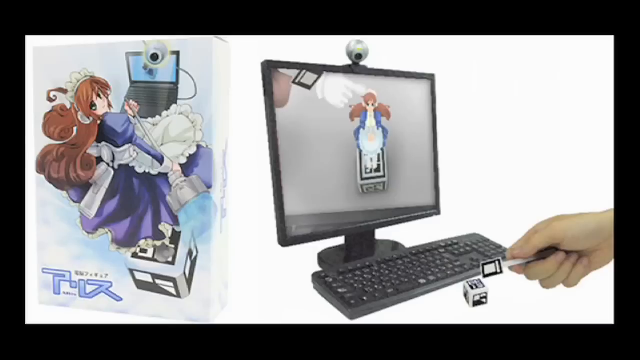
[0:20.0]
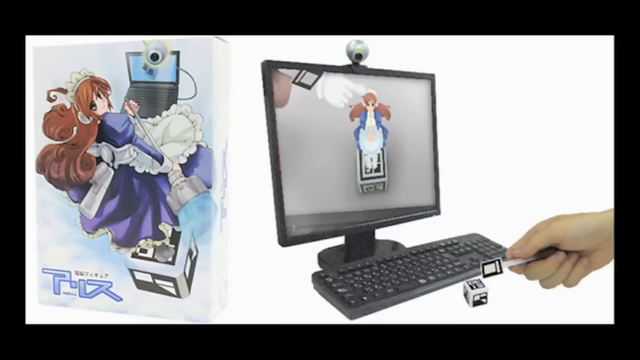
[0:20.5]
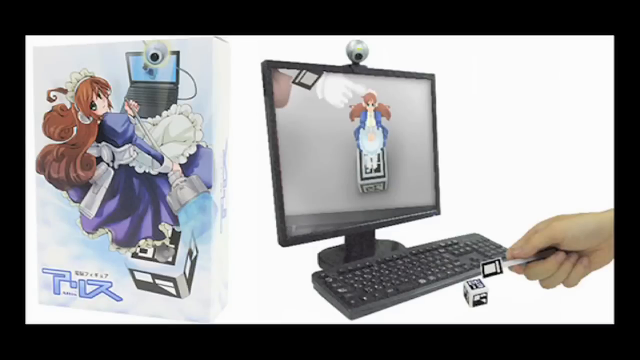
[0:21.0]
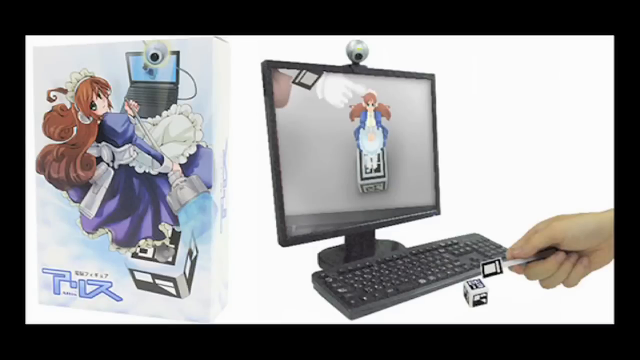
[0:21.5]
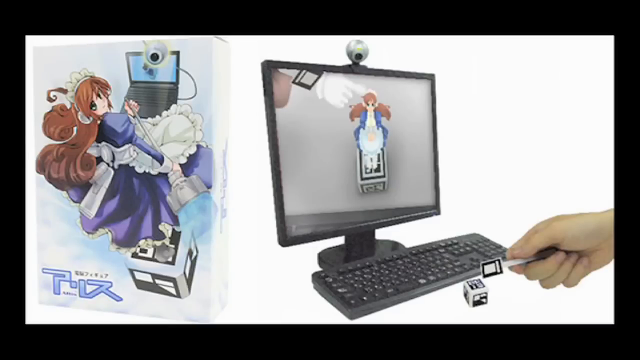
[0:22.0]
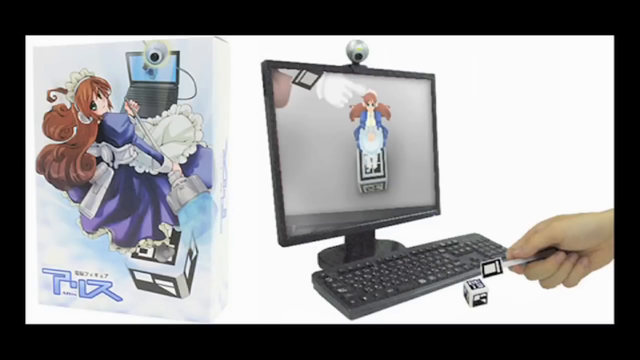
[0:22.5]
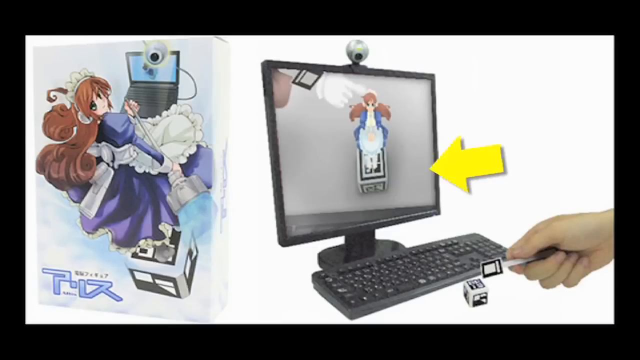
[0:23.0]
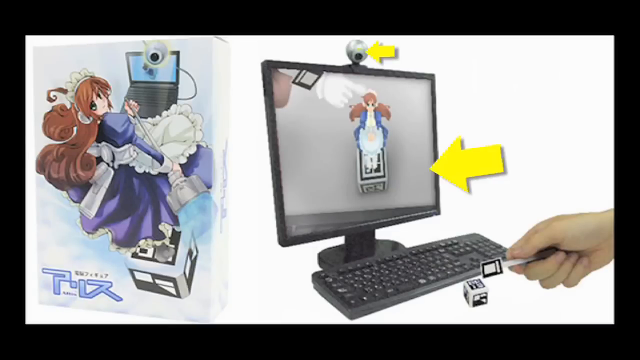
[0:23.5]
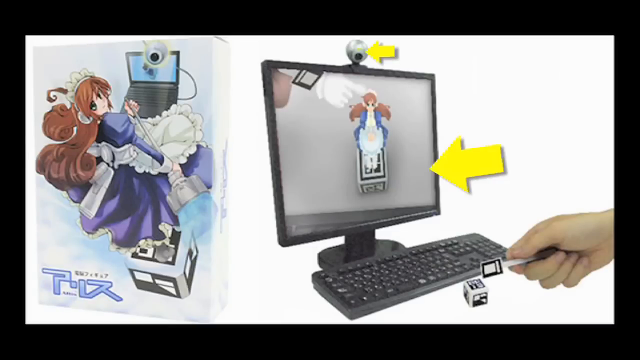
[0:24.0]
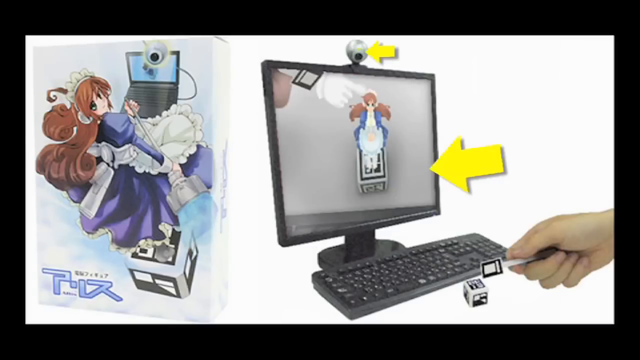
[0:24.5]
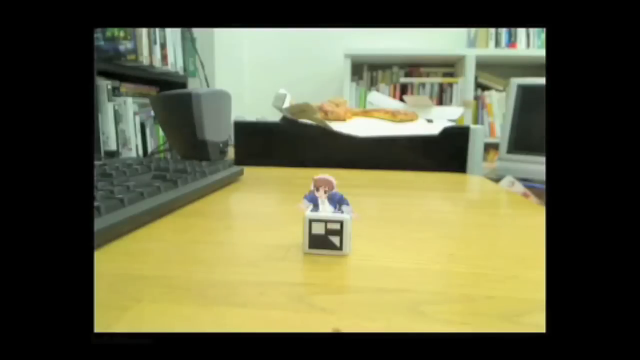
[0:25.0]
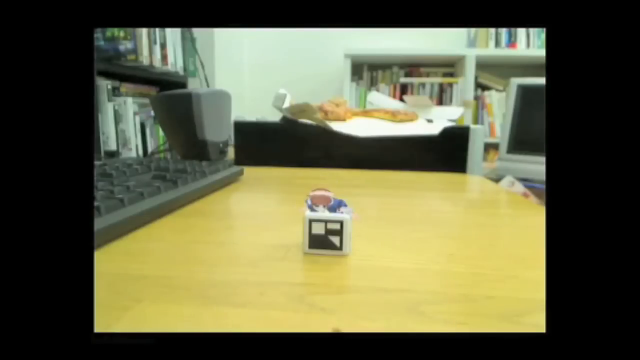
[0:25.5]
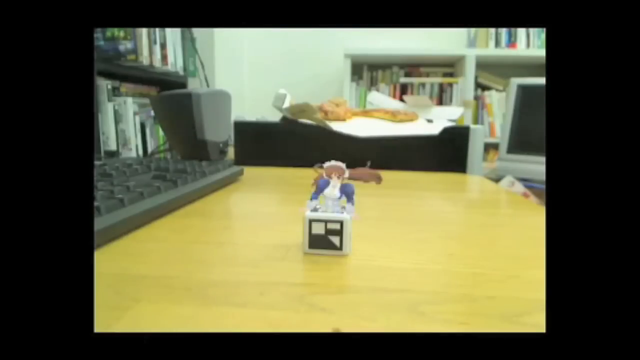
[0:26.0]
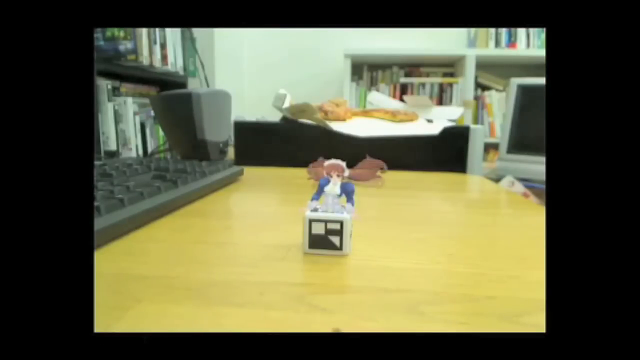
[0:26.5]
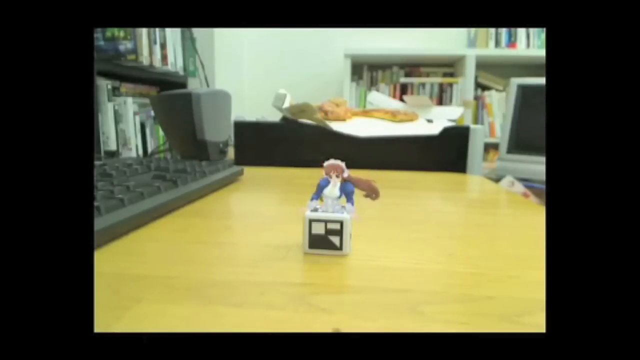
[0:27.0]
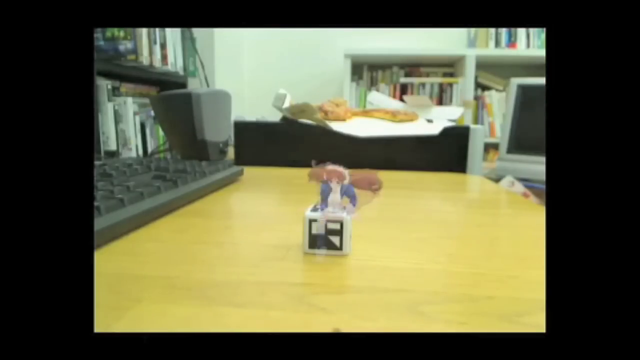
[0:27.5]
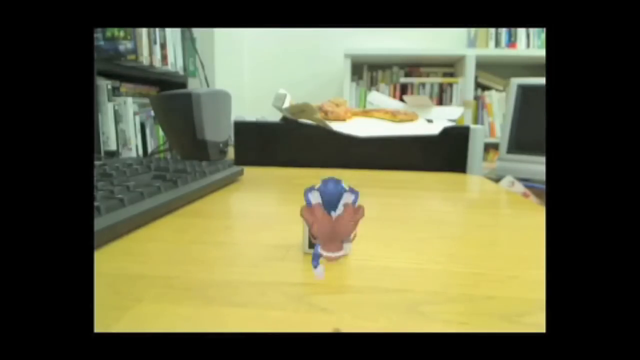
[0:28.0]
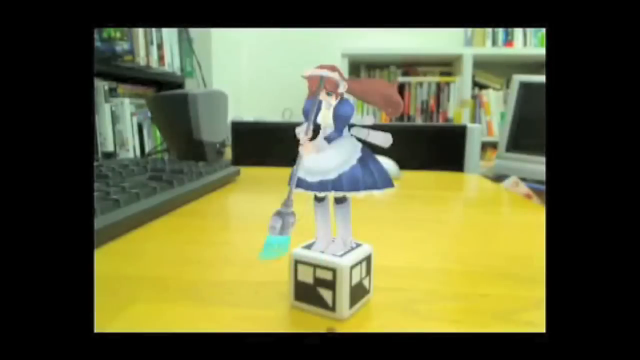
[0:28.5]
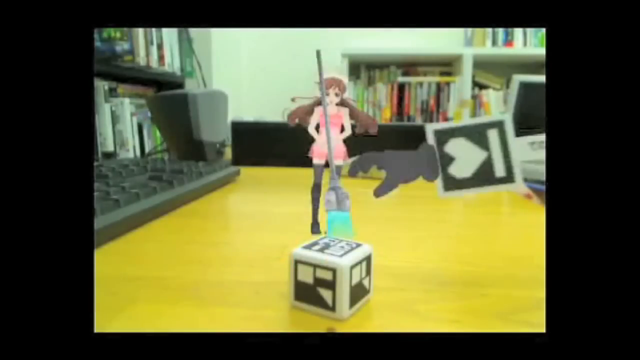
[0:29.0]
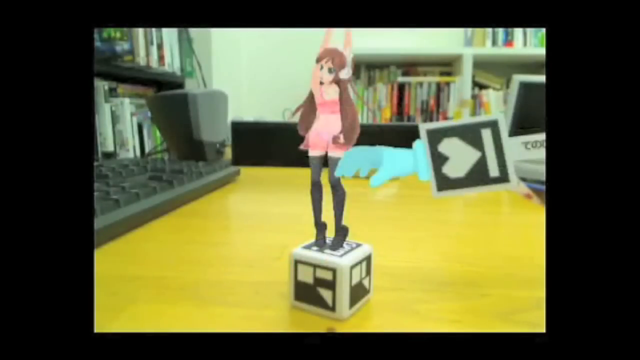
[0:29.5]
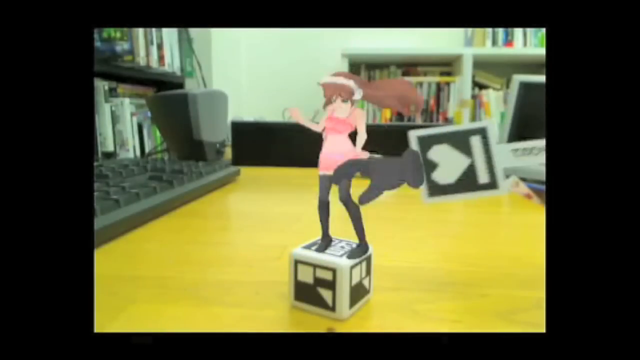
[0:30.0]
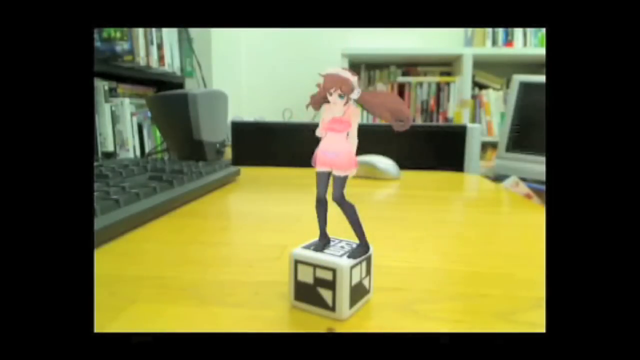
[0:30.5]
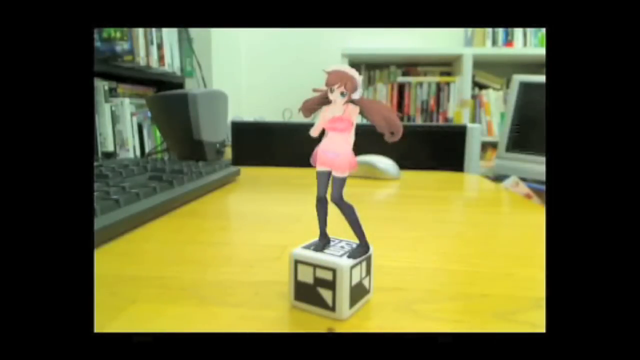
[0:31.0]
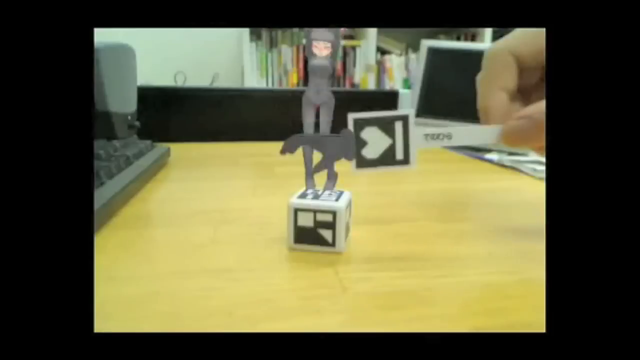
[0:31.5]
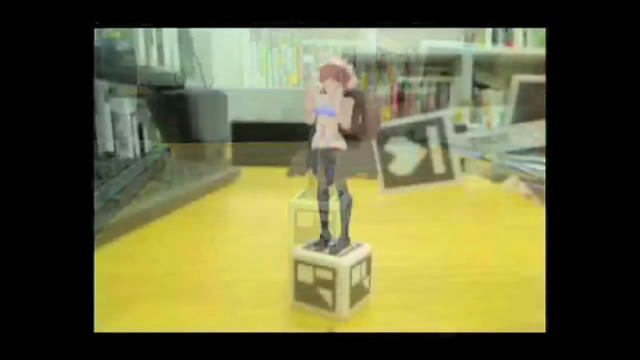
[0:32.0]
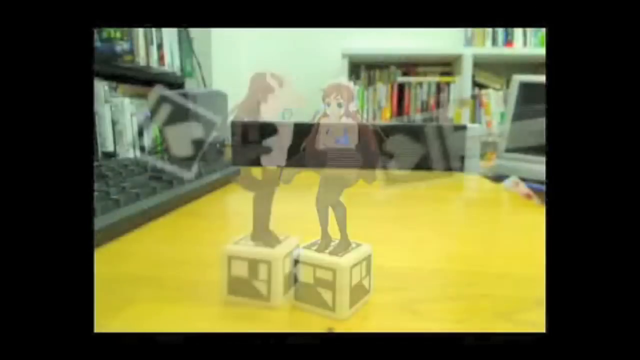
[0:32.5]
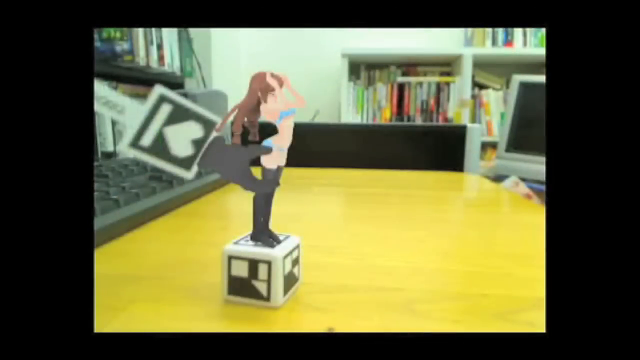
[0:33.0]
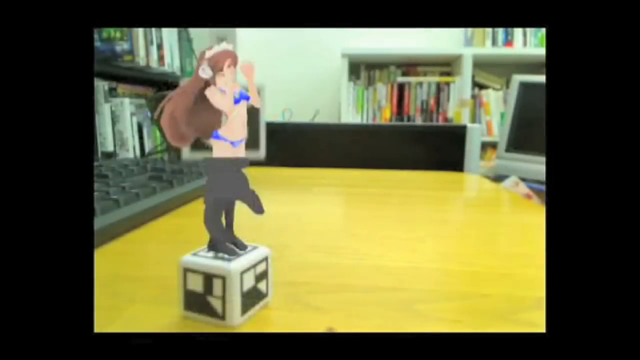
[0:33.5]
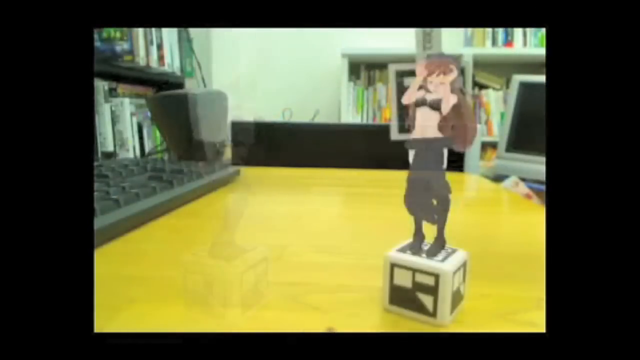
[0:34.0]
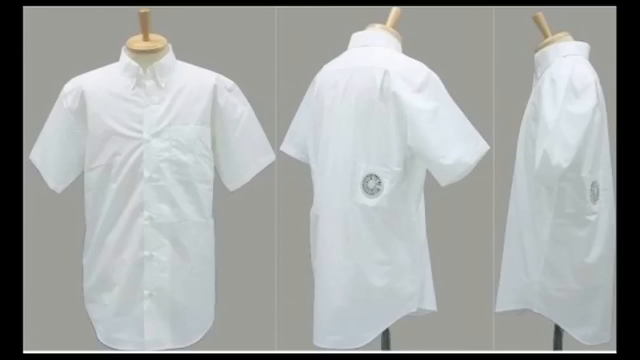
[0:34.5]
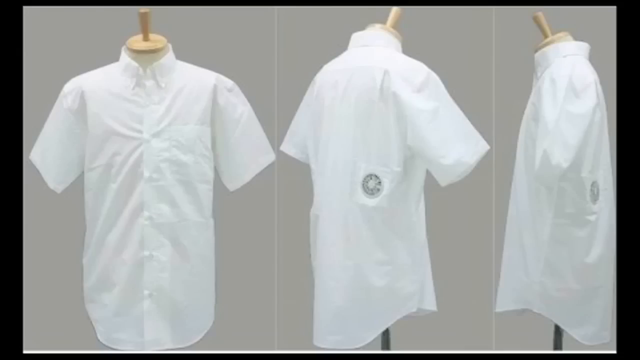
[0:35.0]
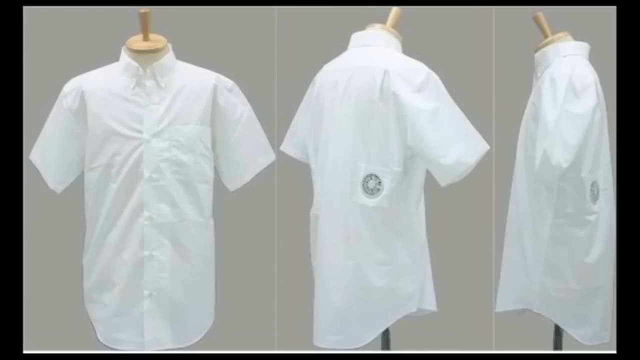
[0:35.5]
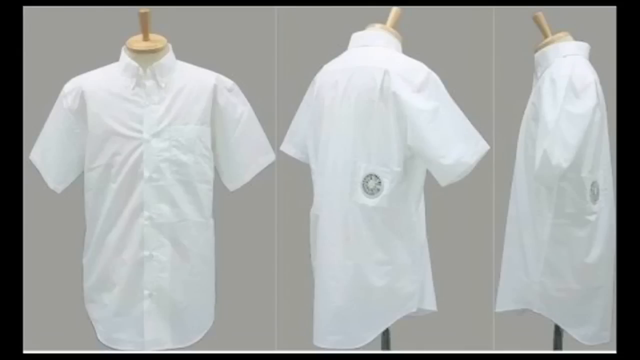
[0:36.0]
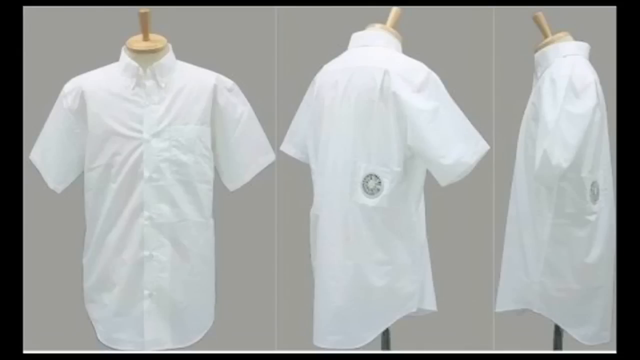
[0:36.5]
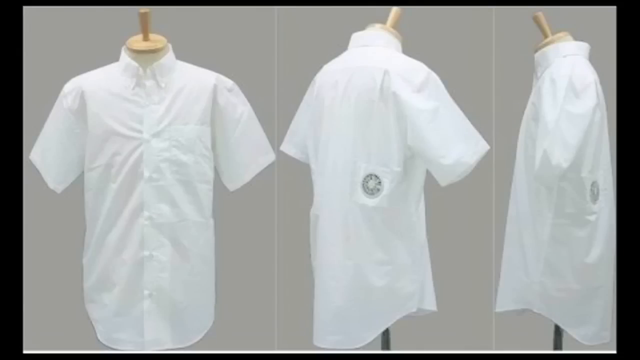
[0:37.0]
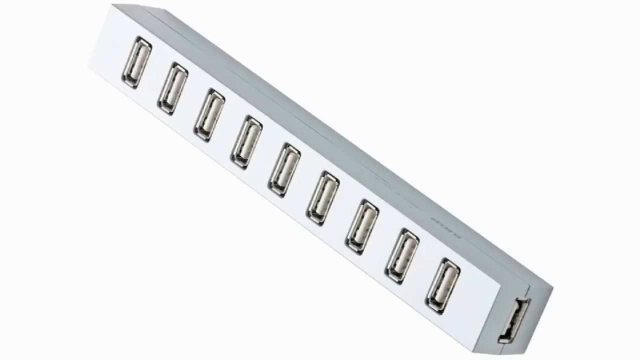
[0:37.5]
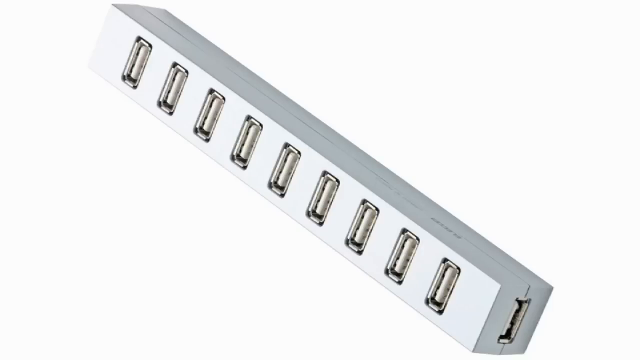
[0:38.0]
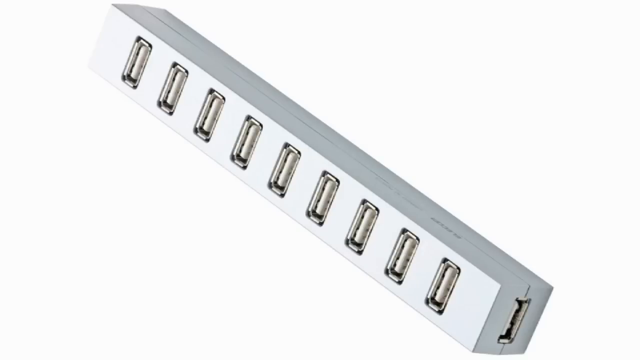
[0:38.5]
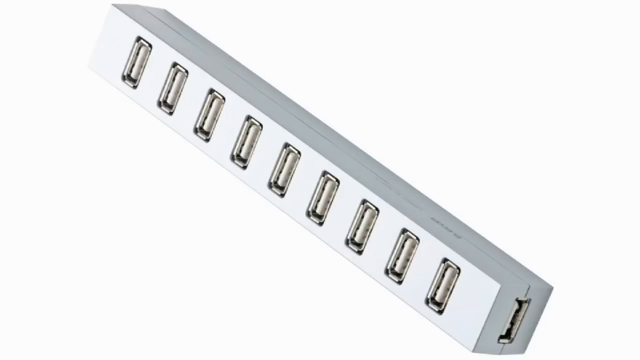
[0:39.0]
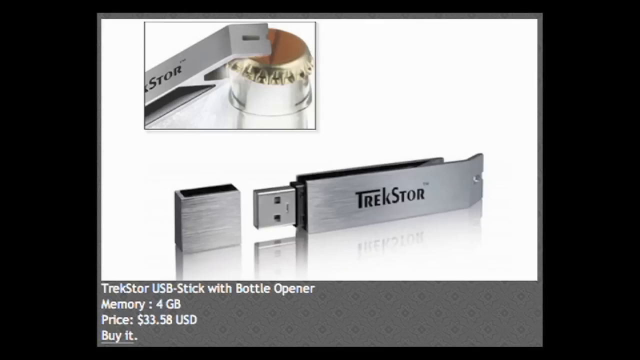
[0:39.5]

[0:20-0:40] A computer monitor with a black keyboard next to it shows an image on its screen, with a yellow arrow pointing at the screen. On the left side is an animated picture of a woman who kind of looks like she is wearing a maid's outfit and seems to be holding something made of metal. On the right side, someone's hand holds something that looks like white plastic with a black square on it. The scene cuts to a white and black square, and the animated maid comes out of the box. The clothes are taken away, leaving her in a short pink dress with black stockings, and another hand comes out and seems to dress the animated figure. Next are three mannequin torsos, all wearing the same white shirt at different angles: the one on the left faces forward, the one in the middle is turned to the right, and the one on the right is turned to the left. Then an image shows a white leveler with a bunch of levels inside it.